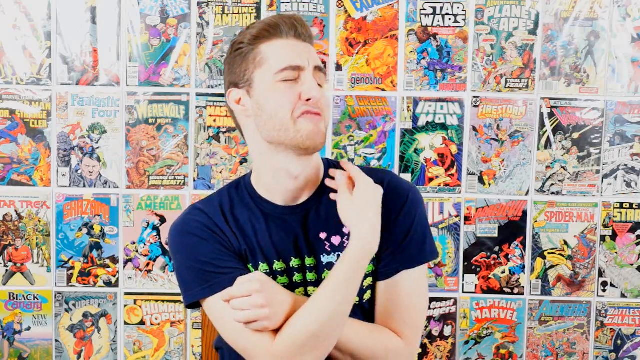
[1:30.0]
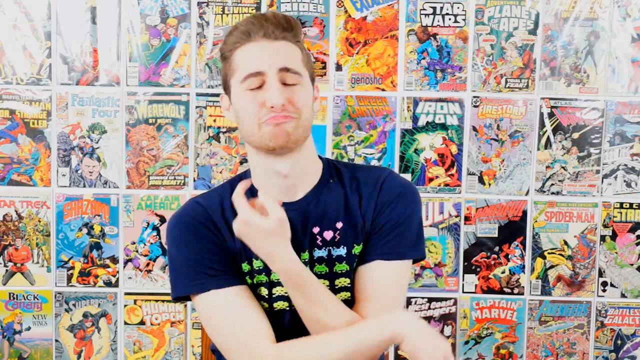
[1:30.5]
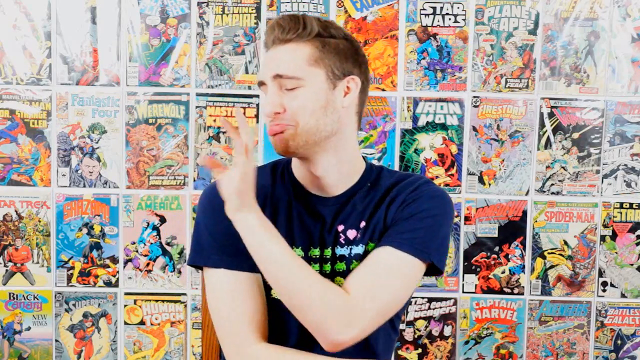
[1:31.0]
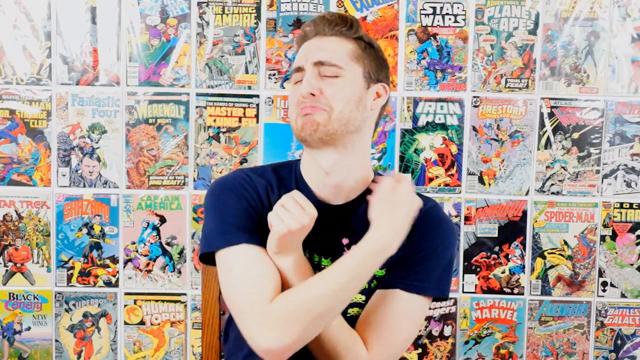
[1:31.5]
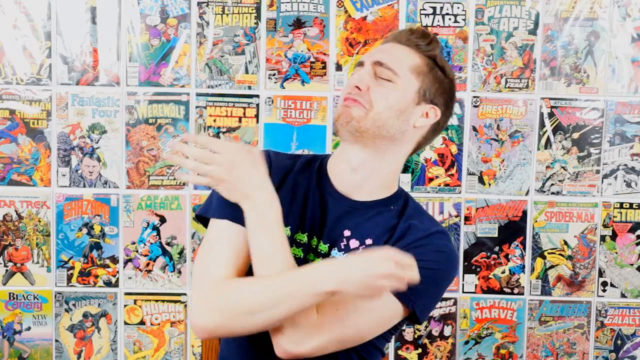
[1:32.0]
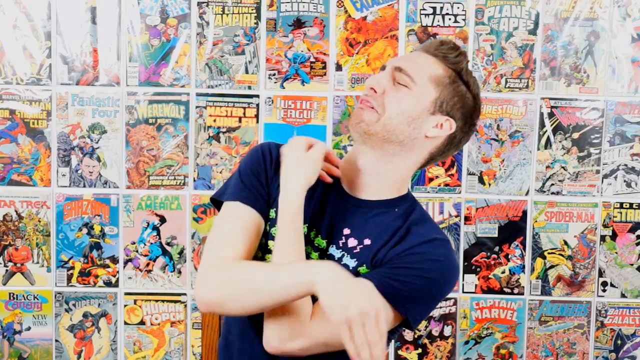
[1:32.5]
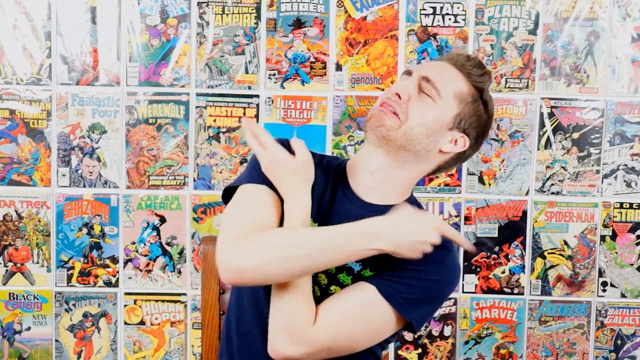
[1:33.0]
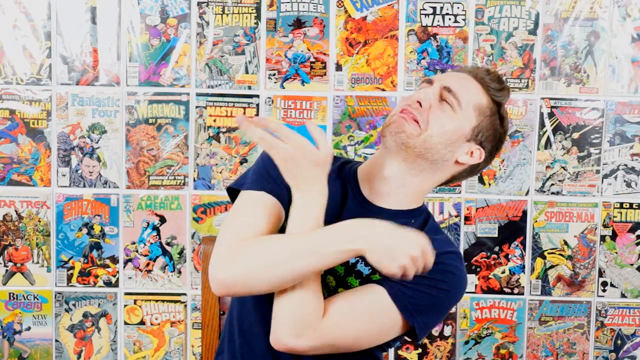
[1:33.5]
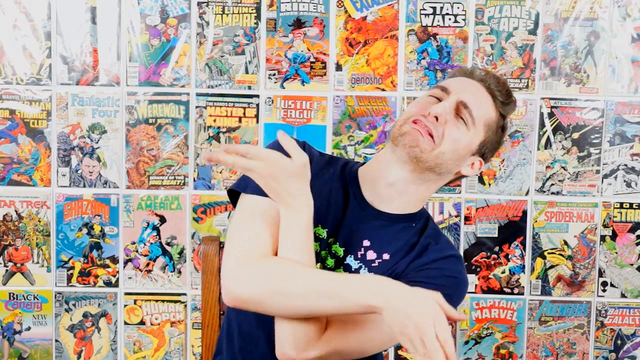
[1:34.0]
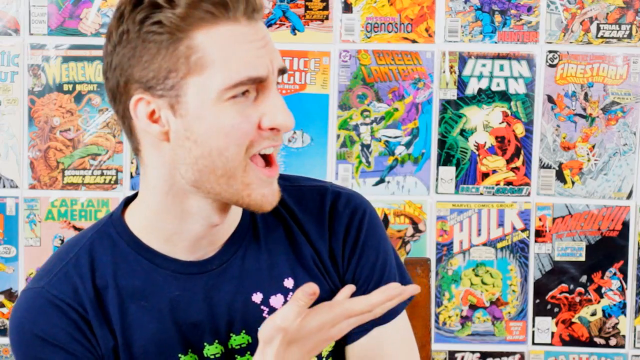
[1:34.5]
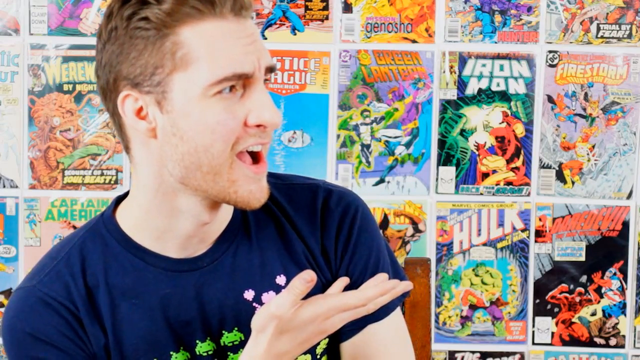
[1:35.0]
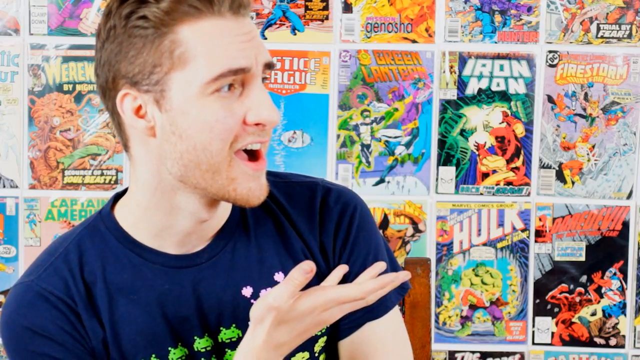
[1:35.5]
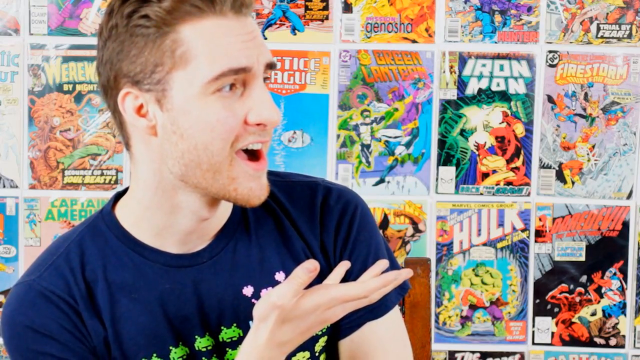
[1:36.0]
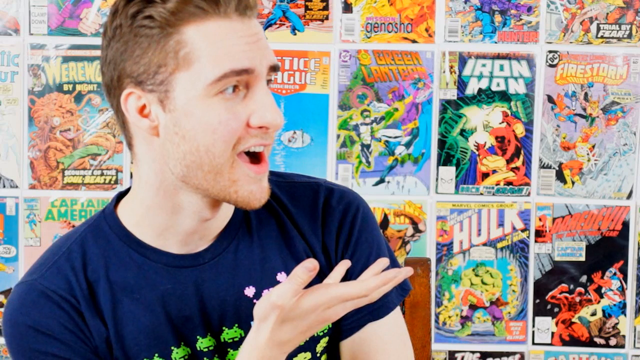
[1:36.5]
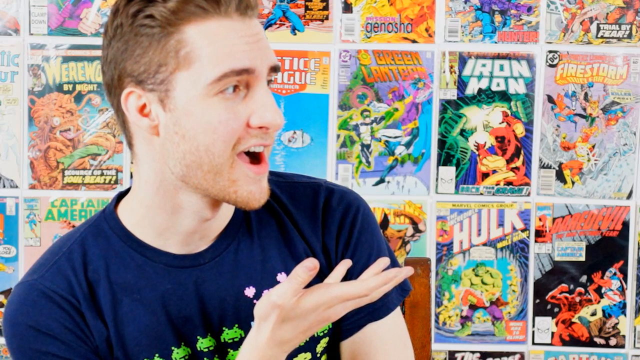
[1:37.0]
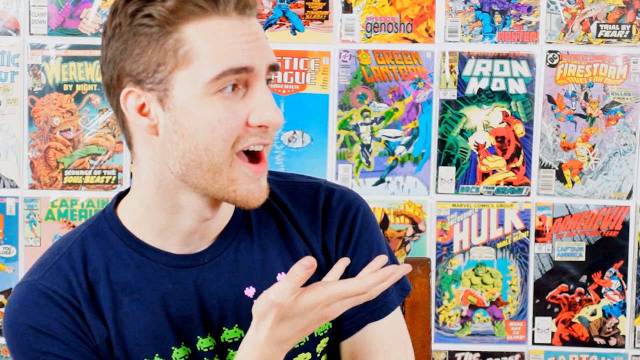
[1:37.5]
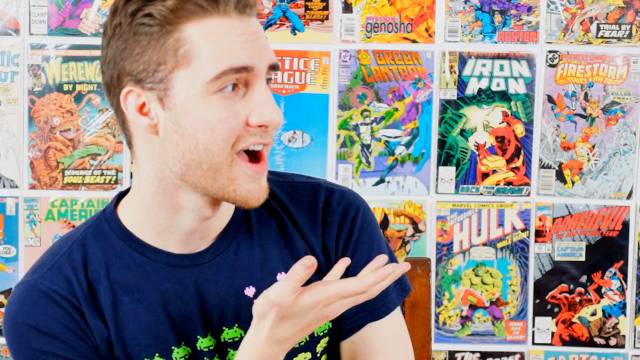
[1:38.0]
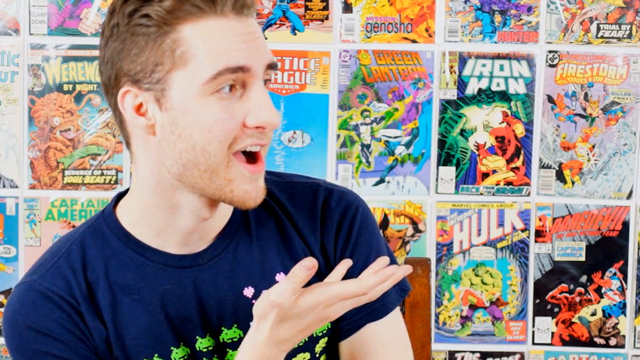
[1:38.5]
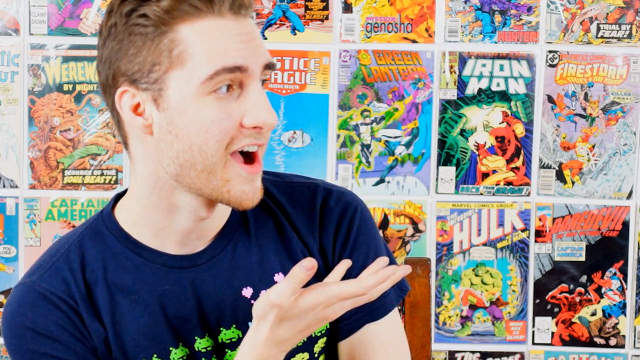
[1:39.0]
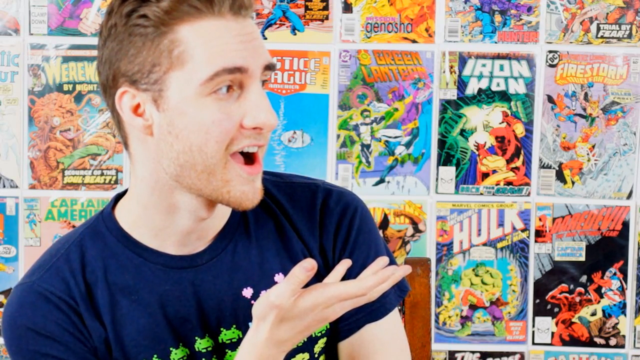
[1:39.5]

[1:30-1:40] The person, sitting down, wipes something off his shoulder in a kind of humorous fashion, then rapidly wipes both shoulders with both hands while looking upward. He leans his body to the left with a humorous look on his face. The camera zooms in on him as he looks to his left, with the comic book cover background behind him. He holds his right hand out in front of him with his mouth open, showing off the comic book covers with a kind of "look at this" vibe.